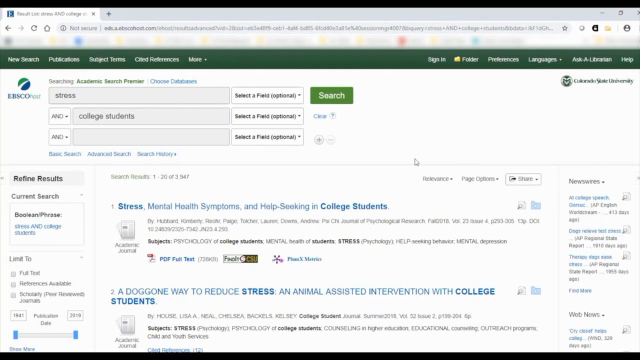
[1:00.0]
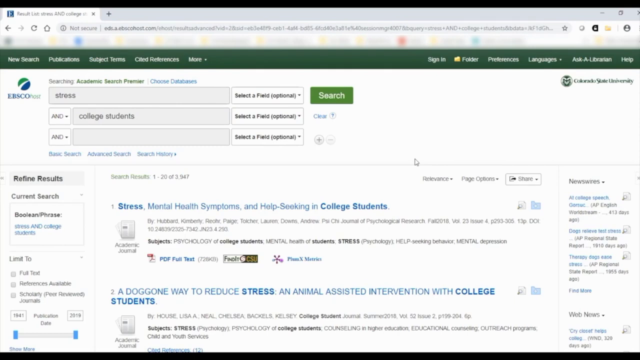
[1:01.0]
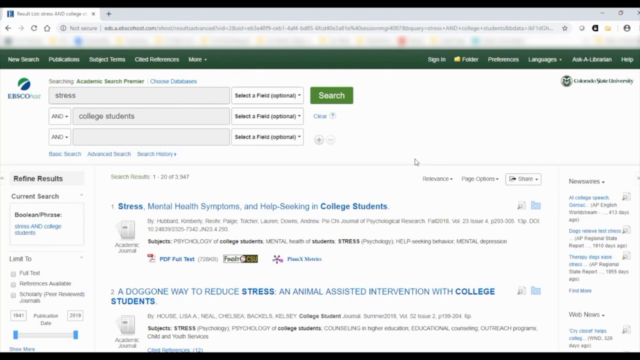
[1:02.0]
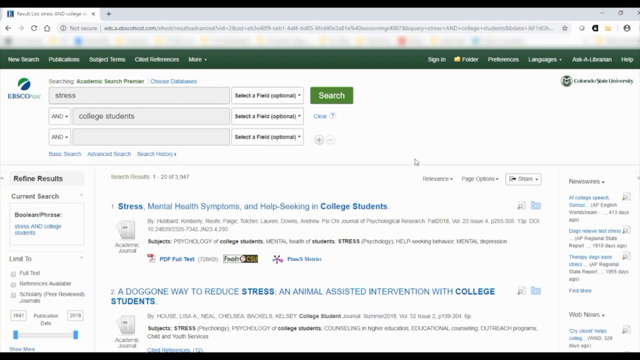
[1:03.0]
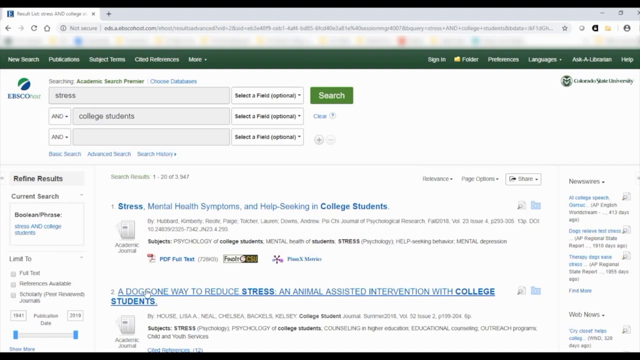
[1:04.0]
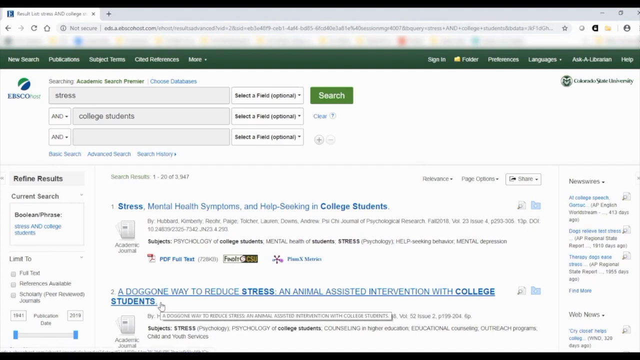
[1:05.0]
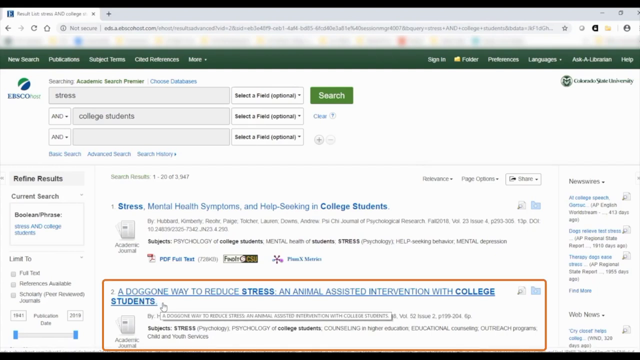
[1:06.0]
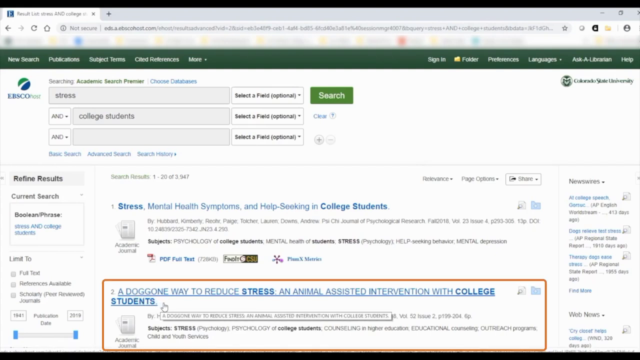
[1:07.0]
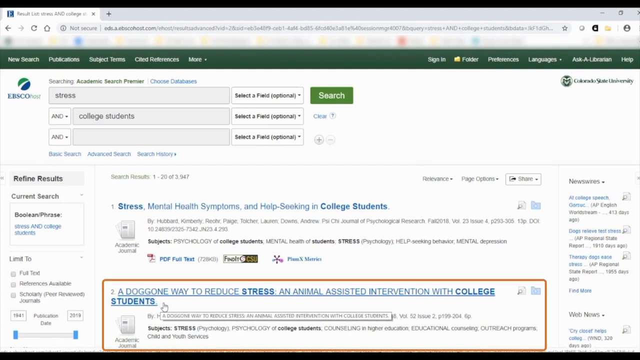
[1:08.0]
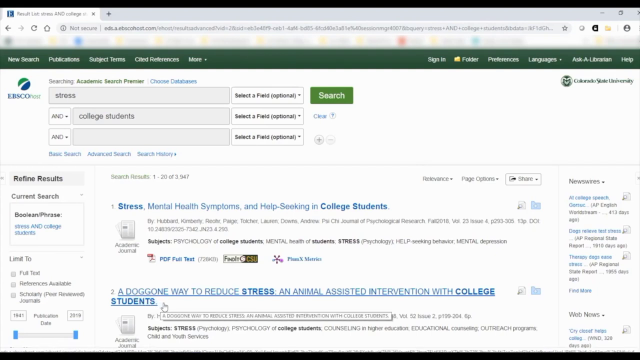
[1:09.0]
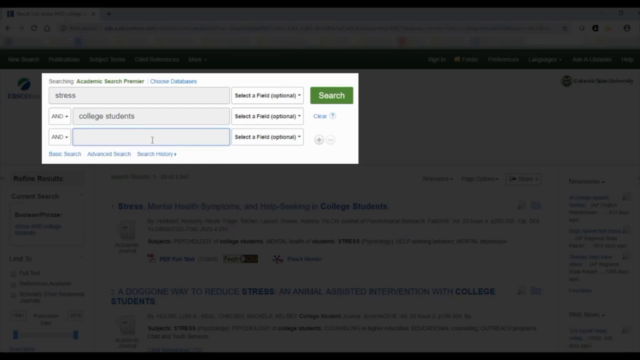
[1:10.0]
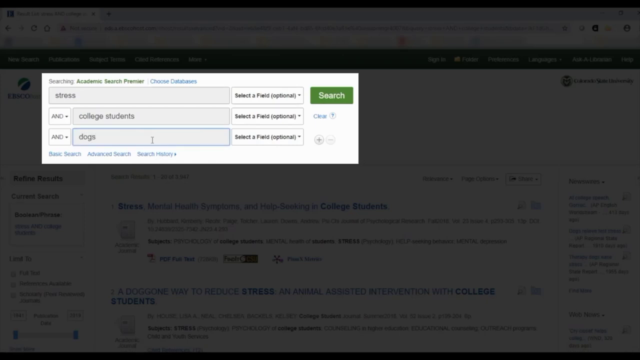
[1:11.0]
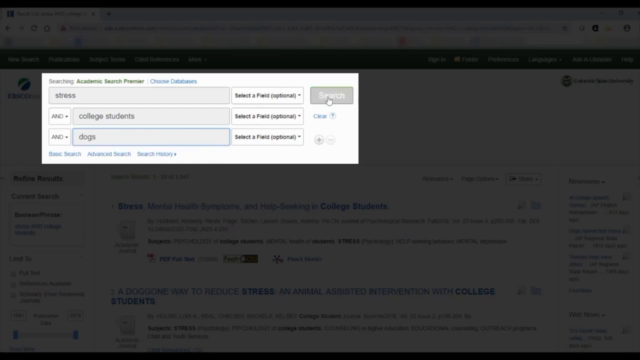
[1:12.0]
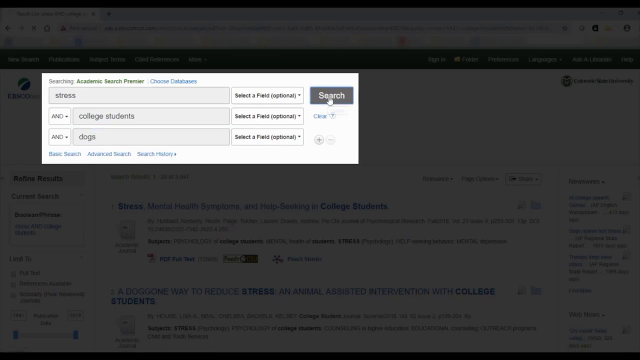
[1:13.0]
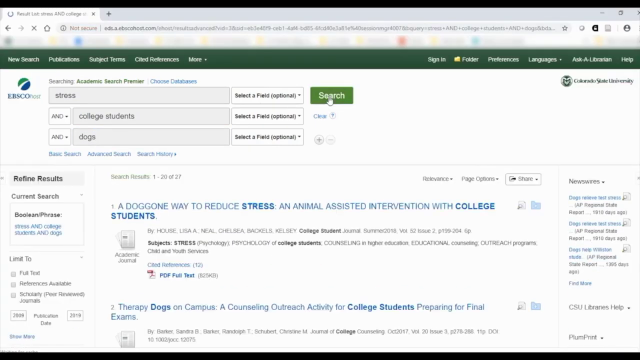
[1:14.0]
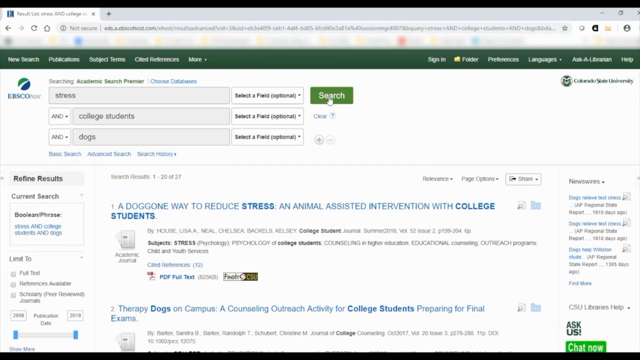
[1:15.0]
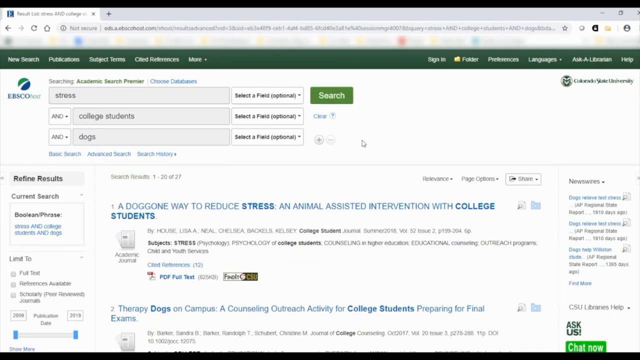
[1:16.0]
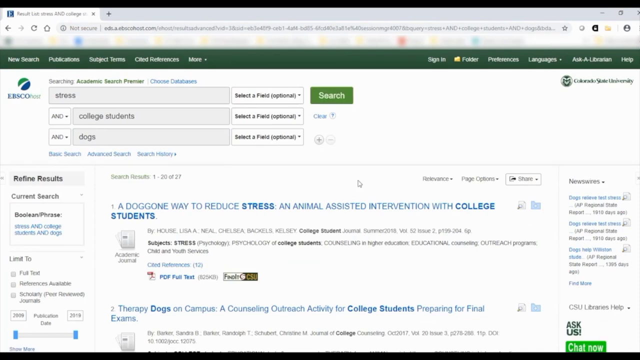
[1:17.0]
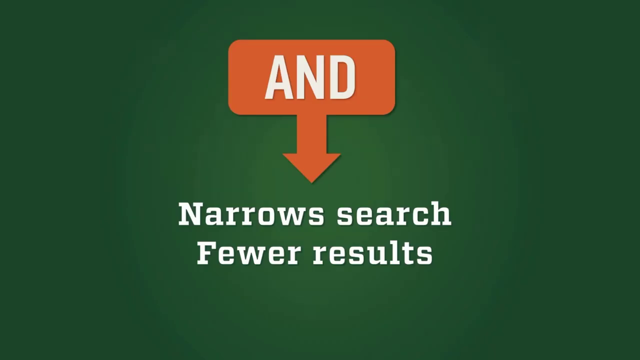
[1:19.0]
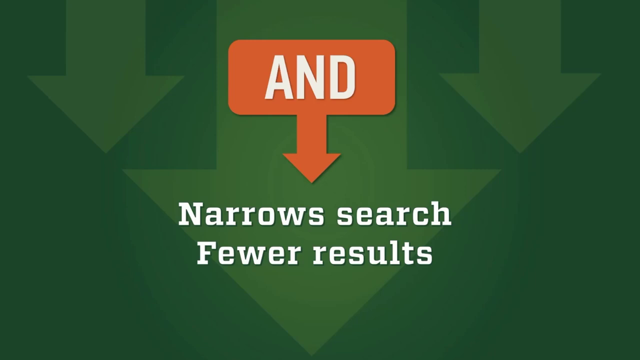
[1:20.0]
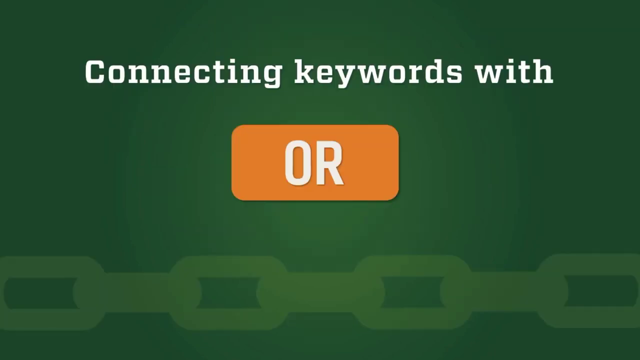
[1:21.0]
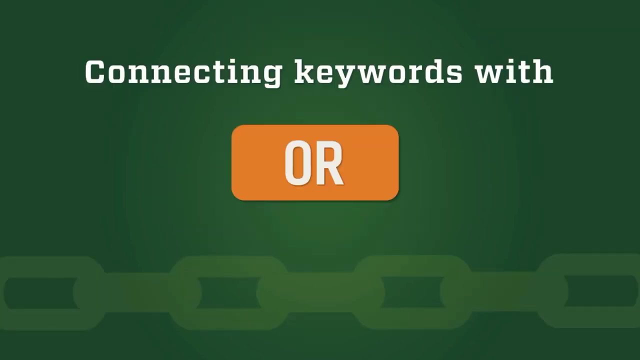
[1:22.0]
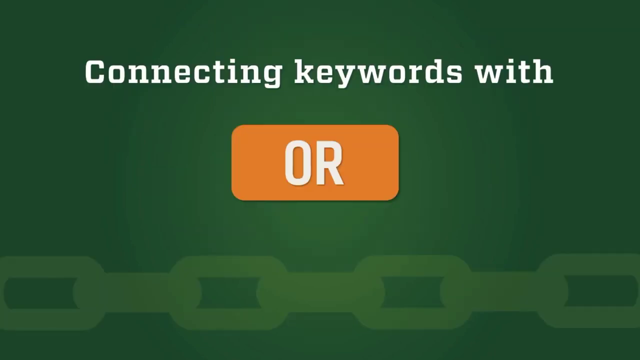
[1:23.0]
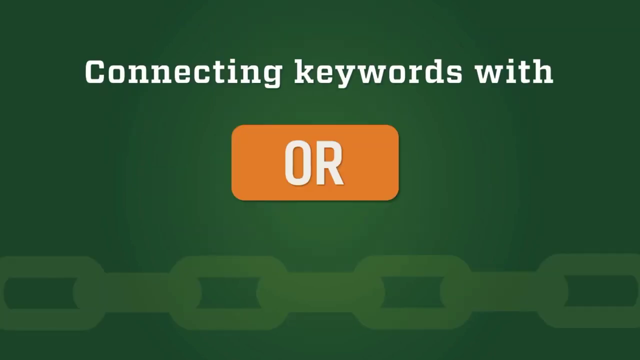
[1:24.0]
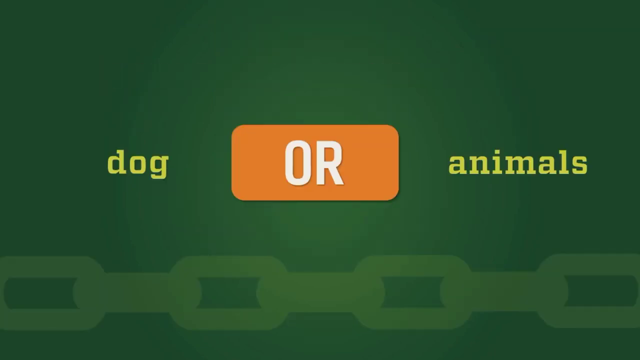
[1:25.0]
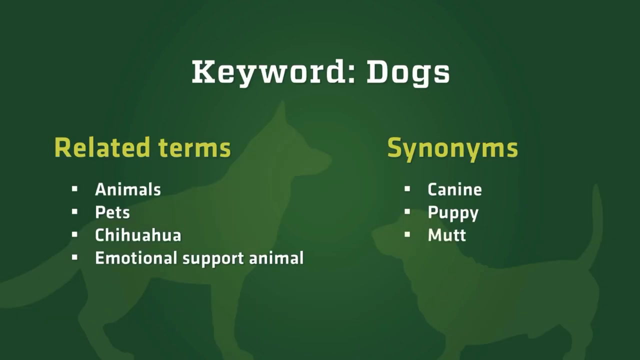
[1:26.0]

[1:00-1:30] A landing page shows a green search box and several columns or places to type information. A green or dark green strip runs across the page with several clickable areas, including "new search" and "publication". The site is mostly white and gray; it looks like a web landing page but is more like a search, with different things to click in the area below. The mouse moves over and points at several things, then an area at the bottom is highlighted with a red outline. A little dialog box comes in, and "dogs" is typed into the third column or row. Another page comes up with a big "N" and an arrow pointing down to "narrow search". A big "connecting words" appears with an orange "or", with dog and animal words coming to the side. "Keyword", "dogs", "related terms" and "synonyms" come up in two columns. The video then goes back to the original site.